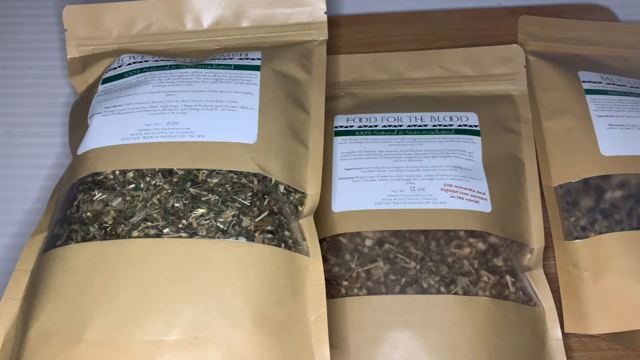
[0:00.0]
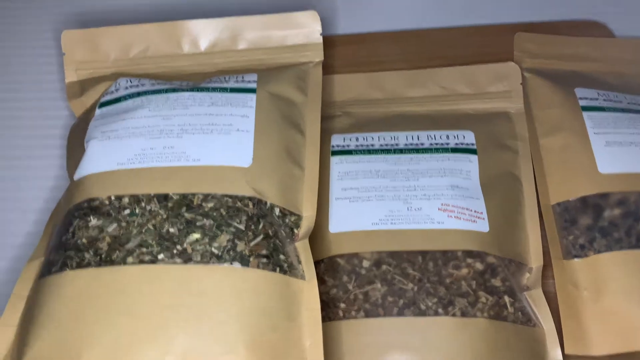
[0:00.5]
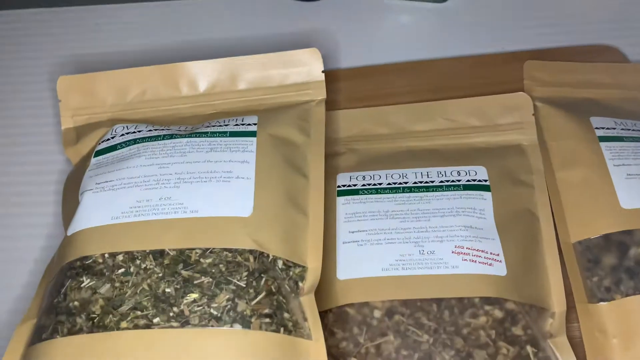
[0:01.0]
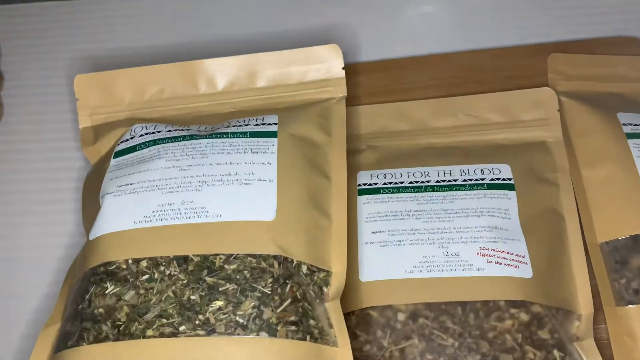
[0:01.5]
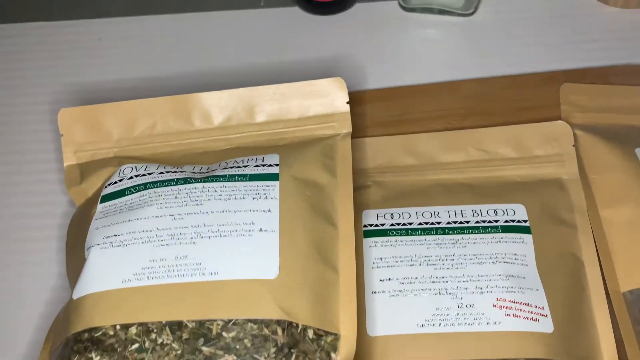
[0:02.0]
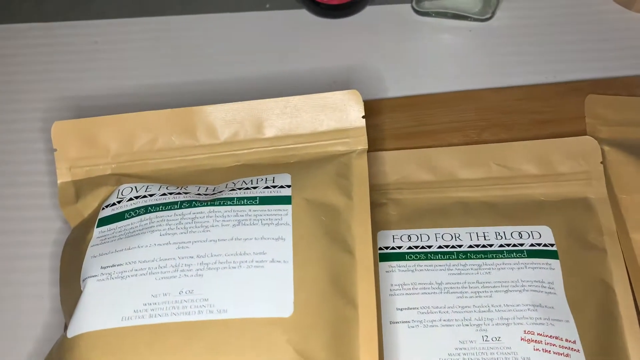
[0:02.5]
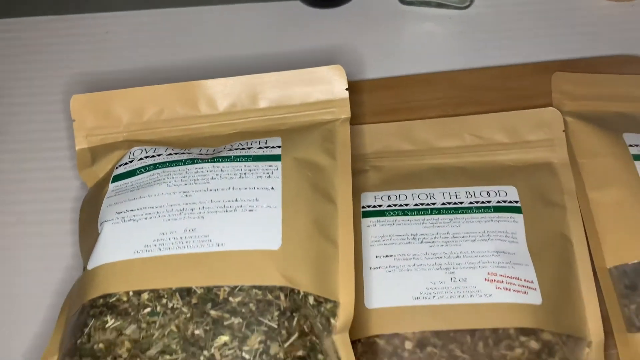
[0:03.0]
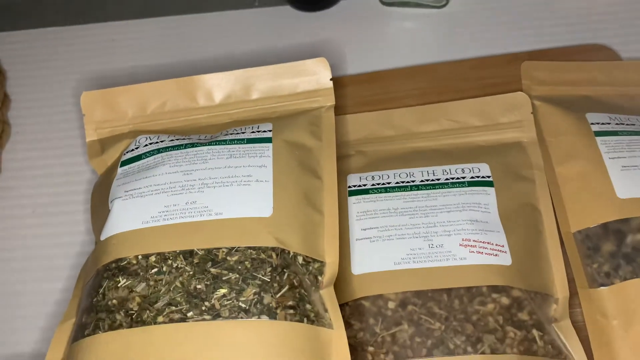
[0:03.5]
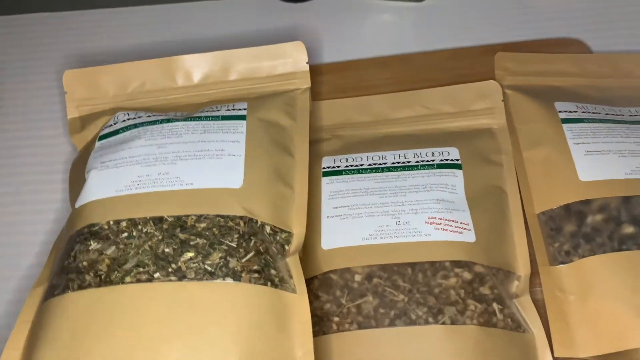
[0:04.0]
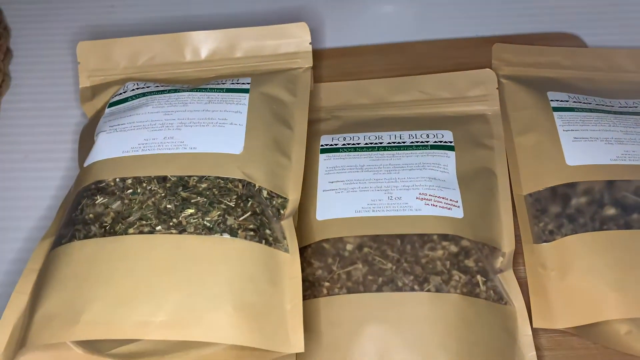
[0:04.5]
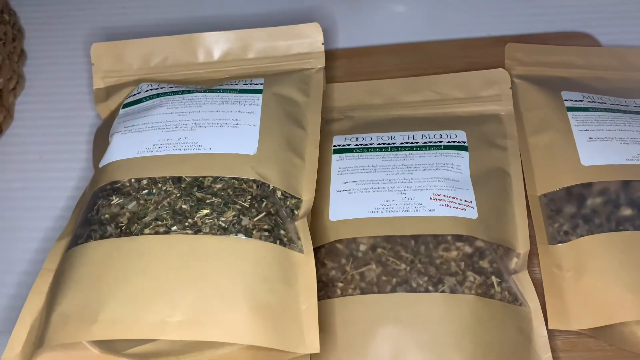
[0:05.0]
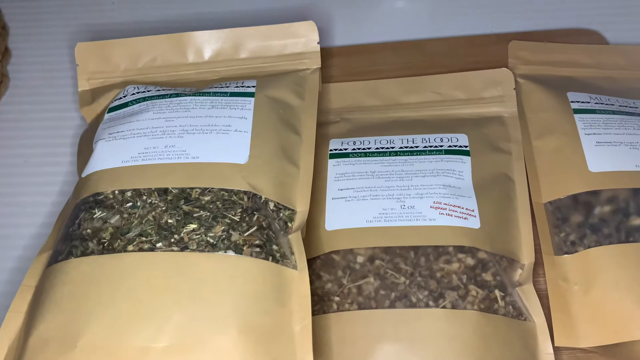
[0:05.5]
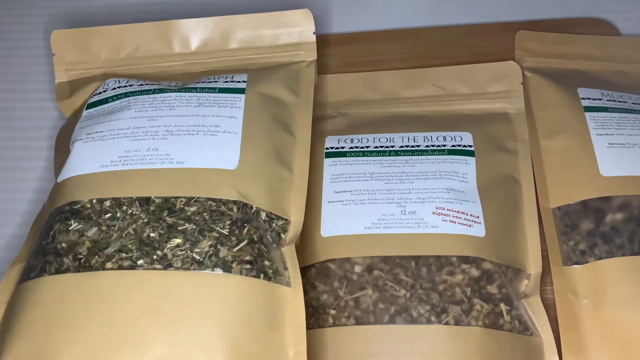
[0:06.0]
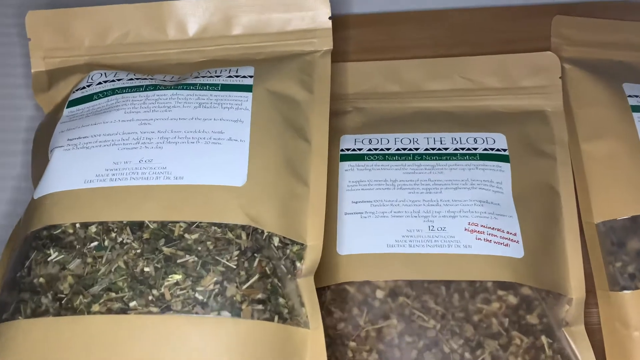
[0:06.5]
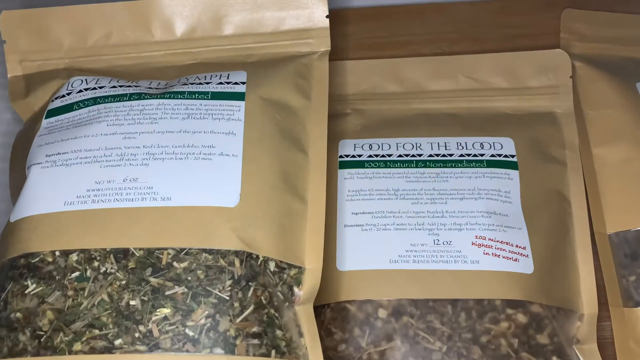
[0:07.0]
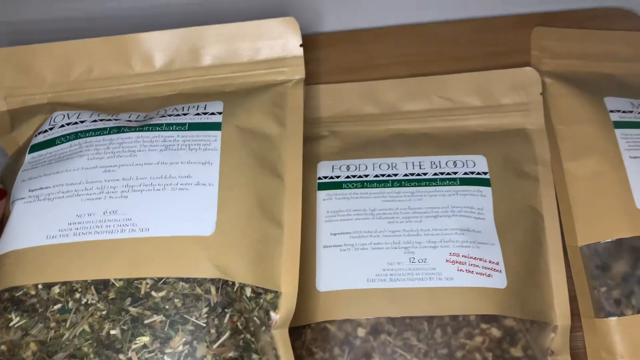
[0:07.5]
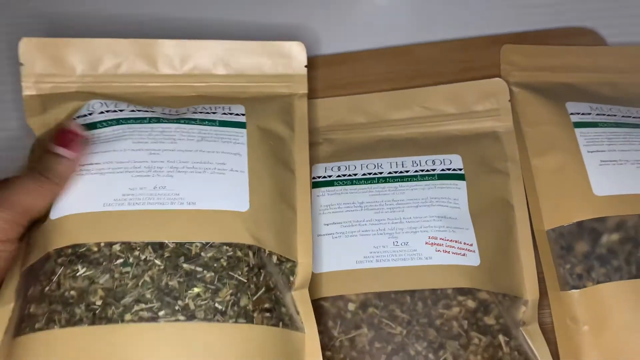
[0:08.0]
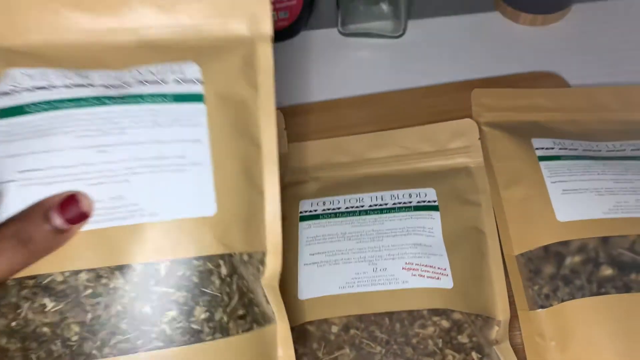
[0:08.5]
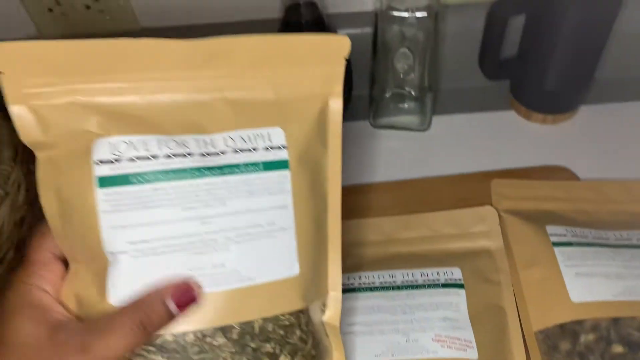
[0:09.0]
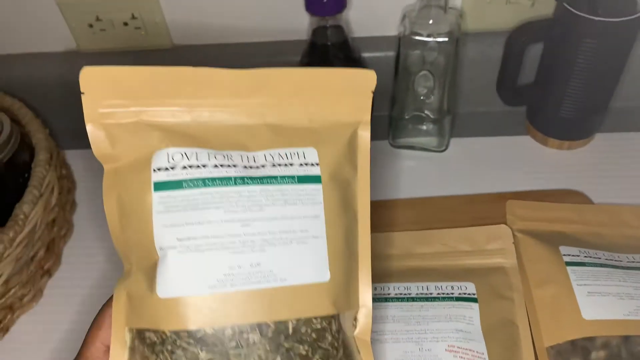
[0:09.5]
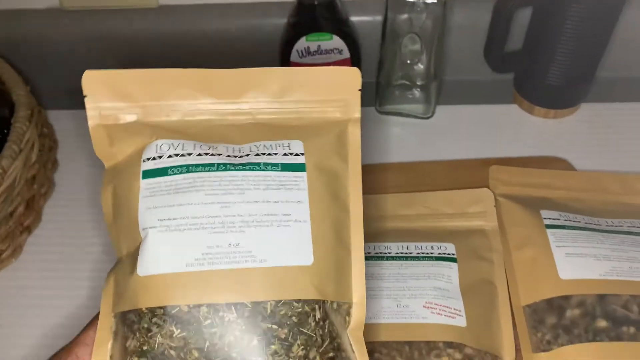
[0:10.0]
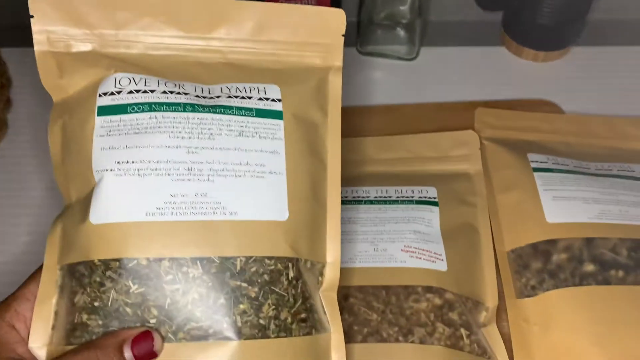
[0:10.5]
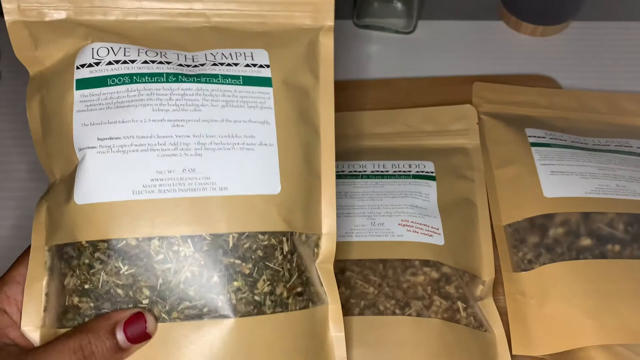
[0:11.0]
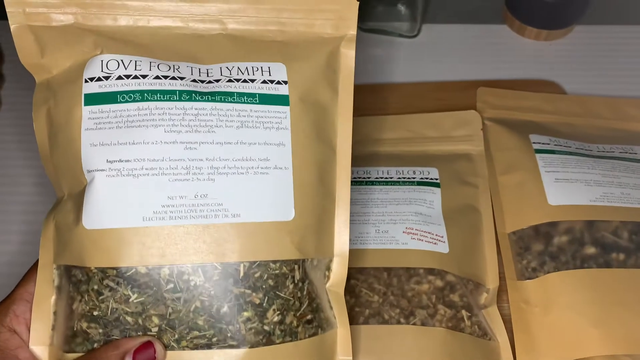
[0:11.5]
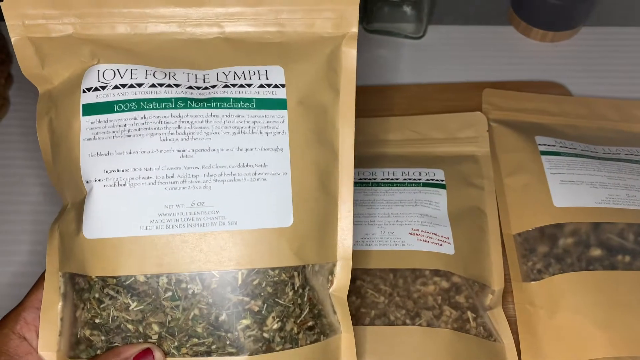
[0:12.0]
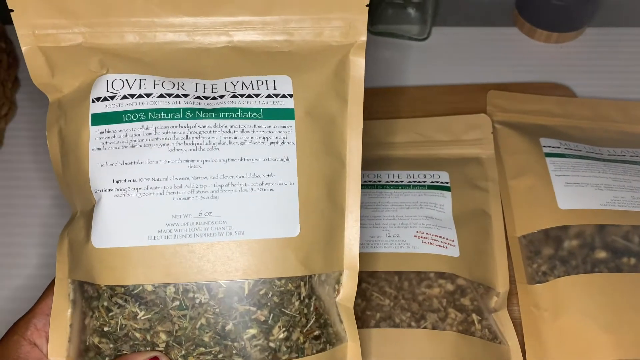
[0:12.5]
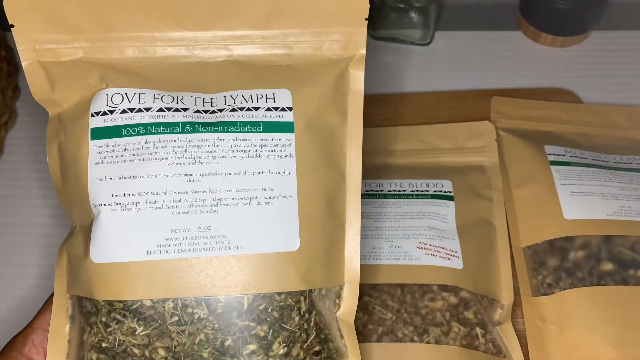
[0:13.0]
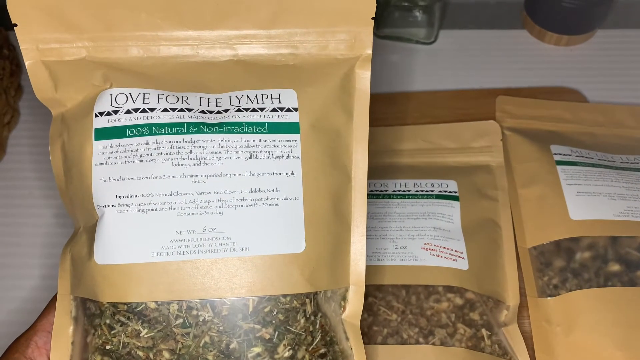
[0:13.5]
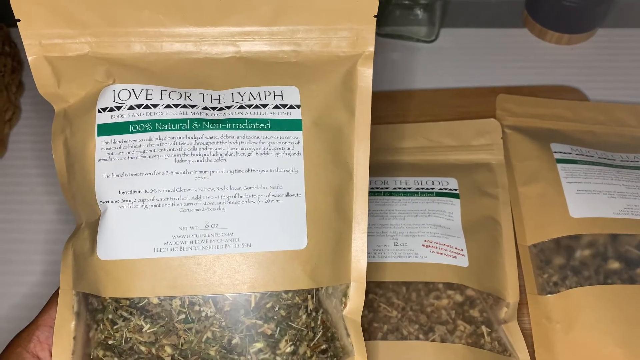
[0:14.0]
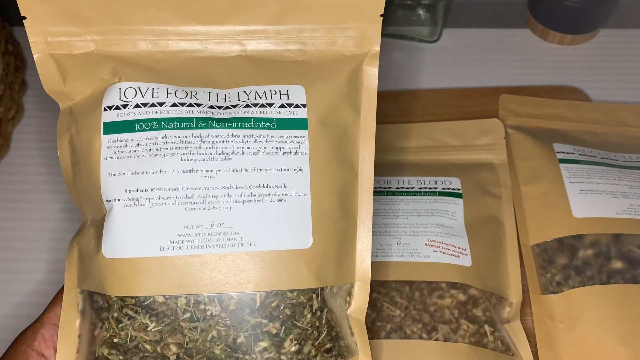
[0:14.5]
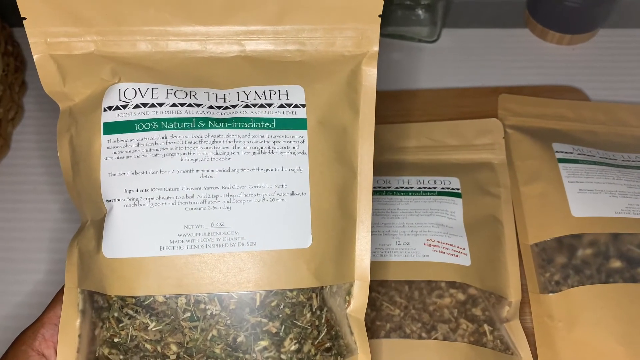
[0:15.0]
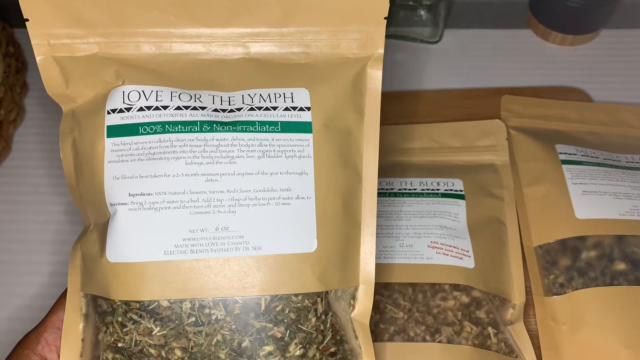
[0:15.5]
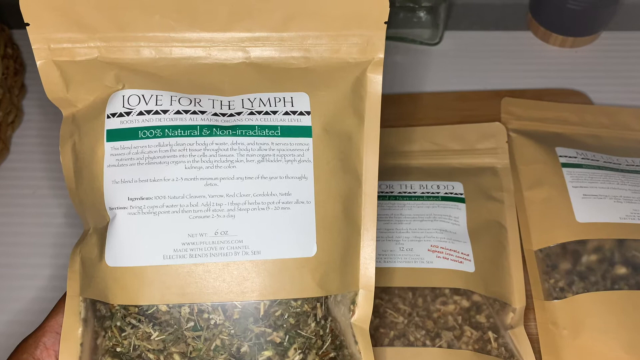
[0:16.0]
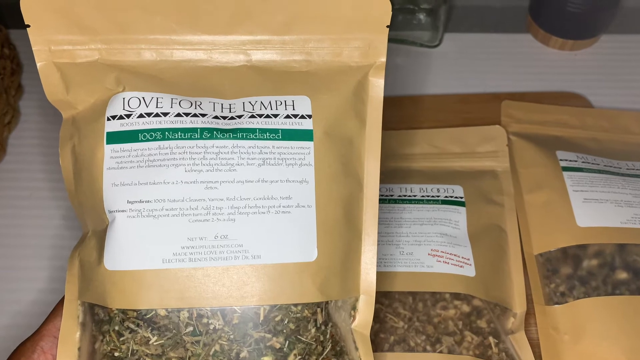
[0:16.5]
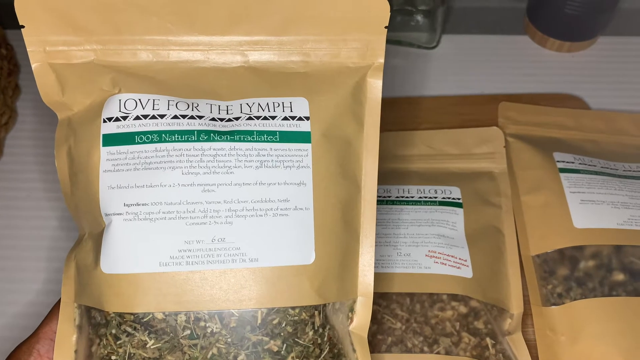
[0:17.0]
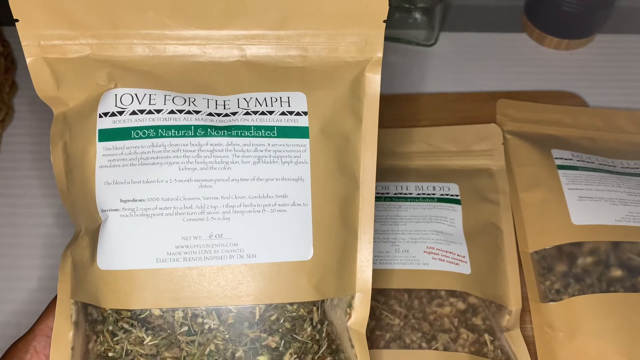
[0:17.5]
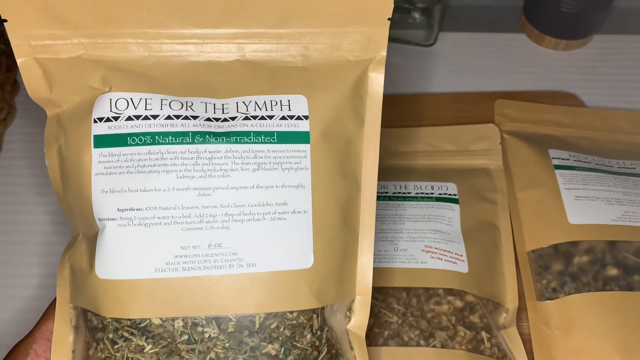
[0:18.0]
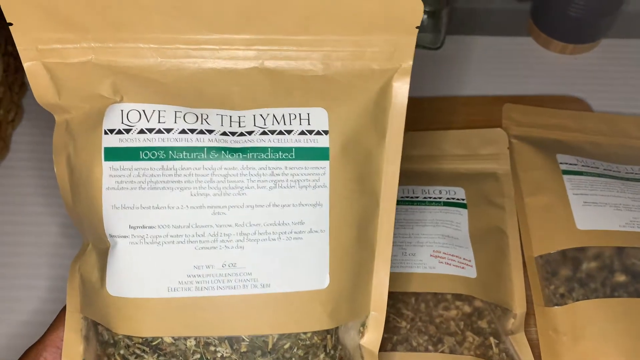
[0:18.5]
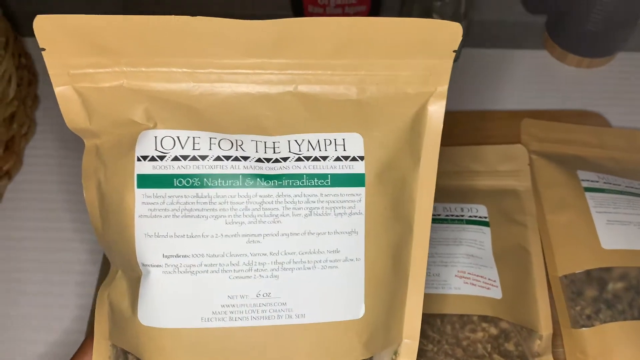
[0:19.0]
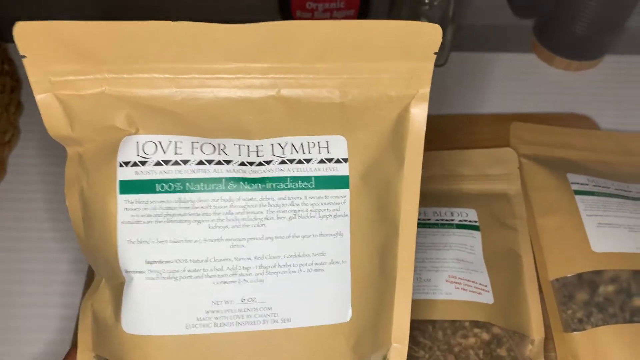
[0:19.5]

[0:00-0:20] A packet, probably containing dried vegetables or dried herbs, carries the words "love for lymph" and "100% natural and non-toxic." A person, probably a woman, holds the package and shows what is written on it, apparently to the camera. It looks like a 1kg bag made of khaki paper with a white label, and the contents look greenish but dried. About three or four bags are visible. The woman lifts the bag up and then puts it down; otherwise nothing changes and the setting stays the same. Not all of the writing on the bag can be read, but it probably relates to the contents of the packages.